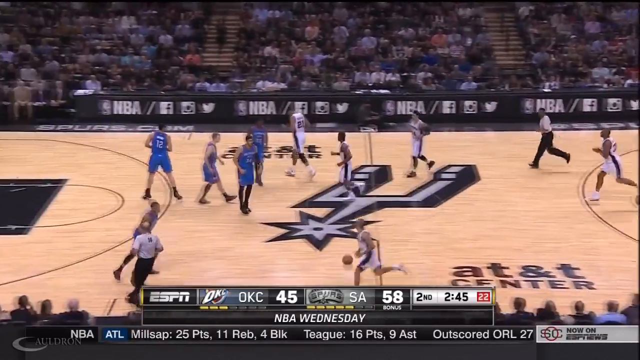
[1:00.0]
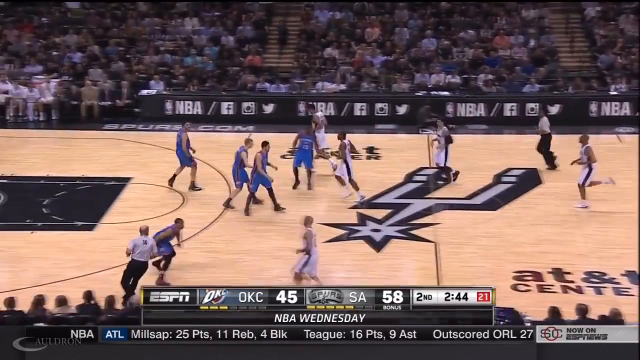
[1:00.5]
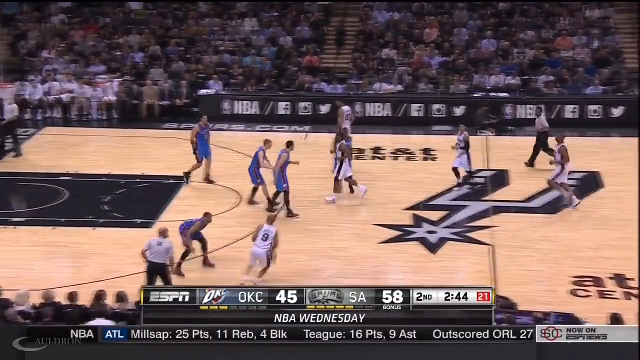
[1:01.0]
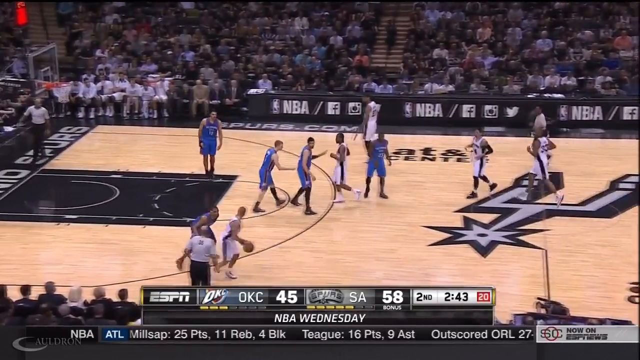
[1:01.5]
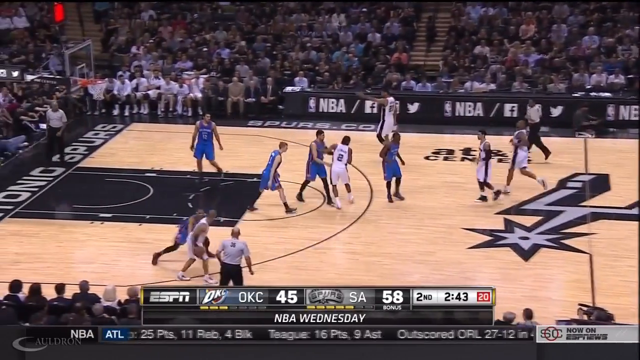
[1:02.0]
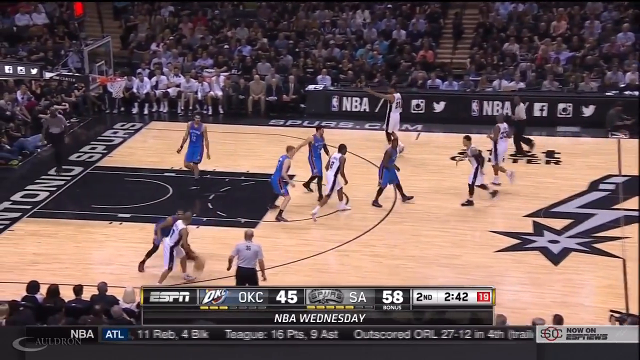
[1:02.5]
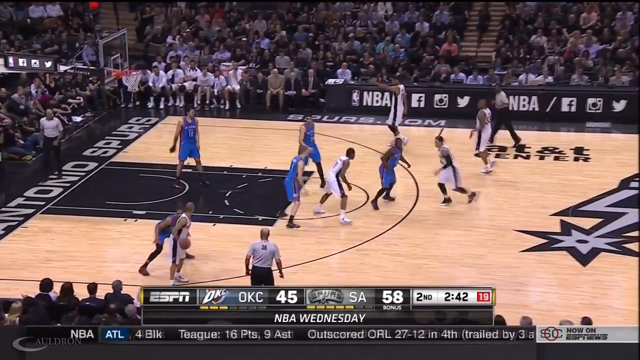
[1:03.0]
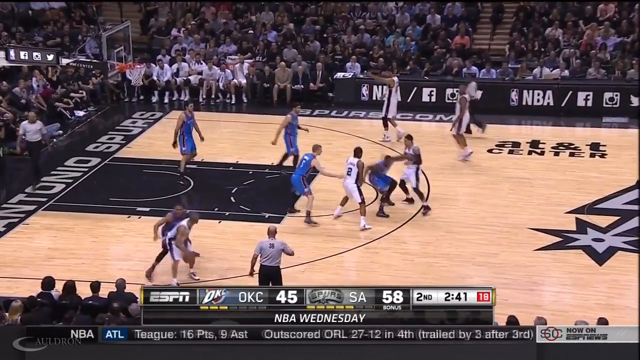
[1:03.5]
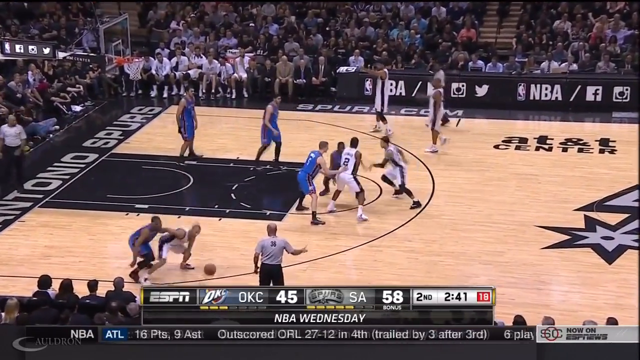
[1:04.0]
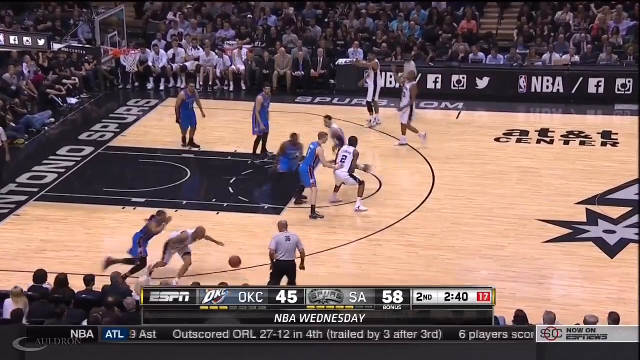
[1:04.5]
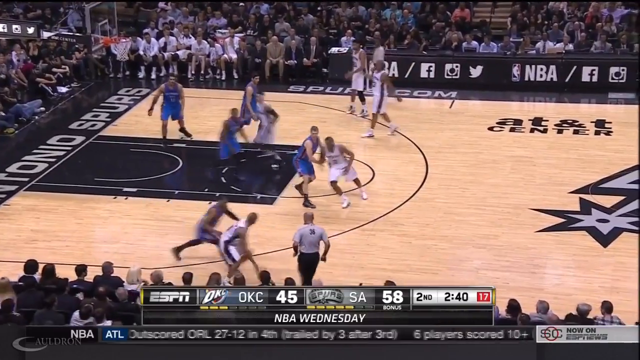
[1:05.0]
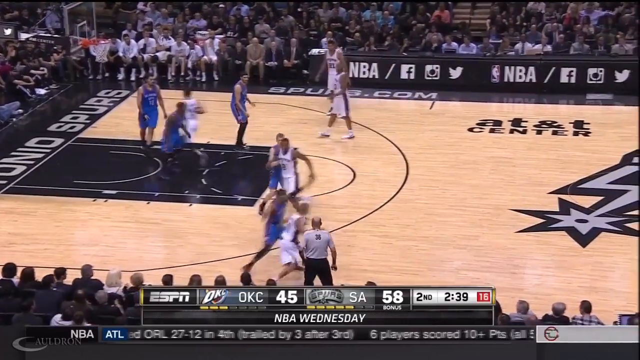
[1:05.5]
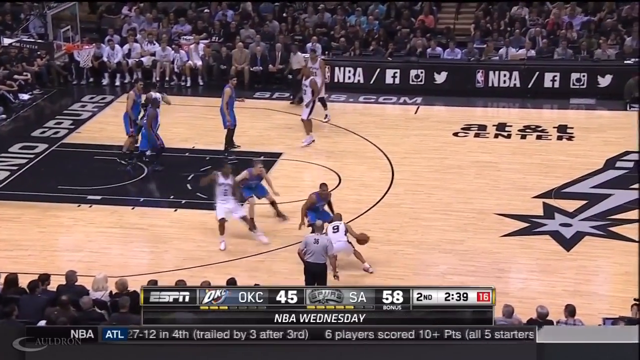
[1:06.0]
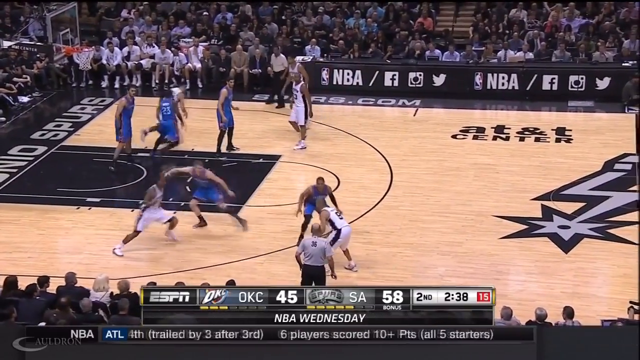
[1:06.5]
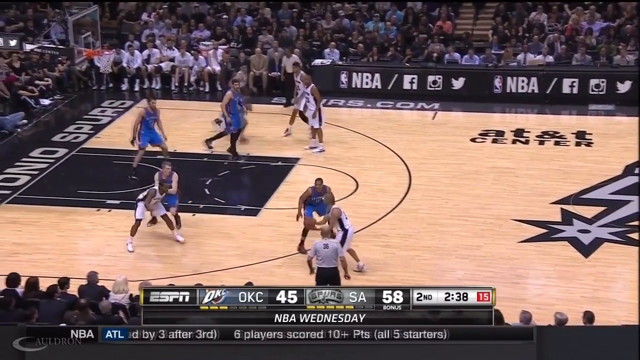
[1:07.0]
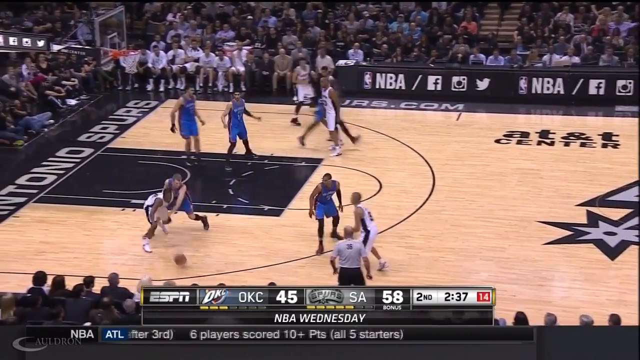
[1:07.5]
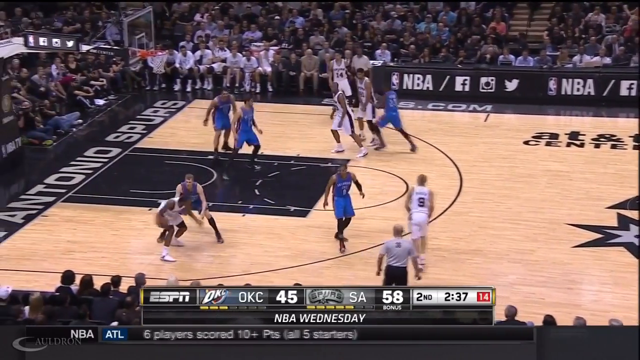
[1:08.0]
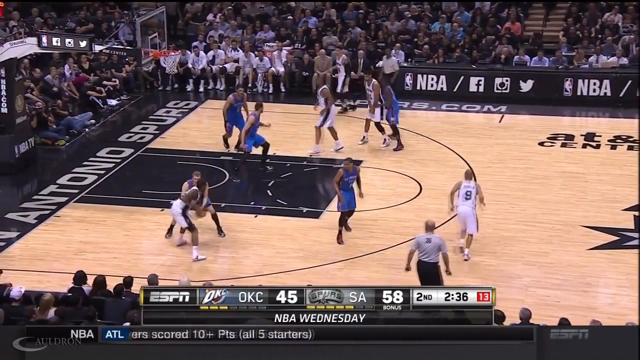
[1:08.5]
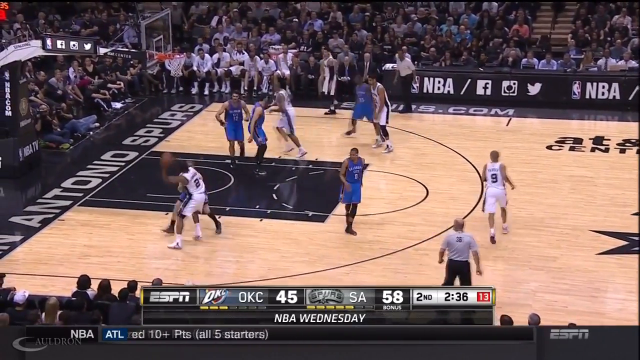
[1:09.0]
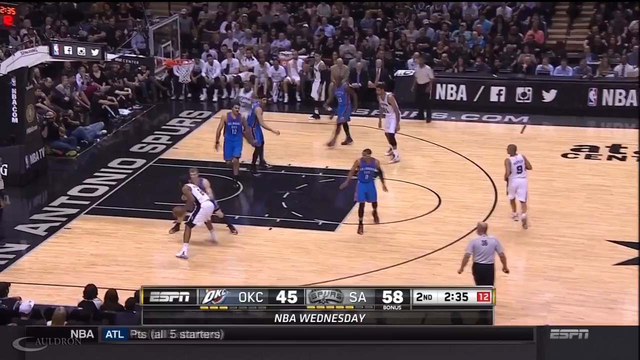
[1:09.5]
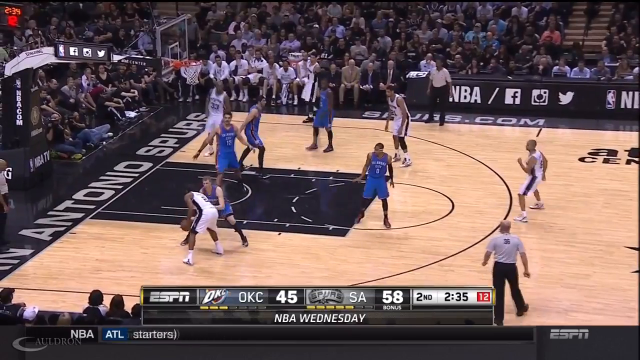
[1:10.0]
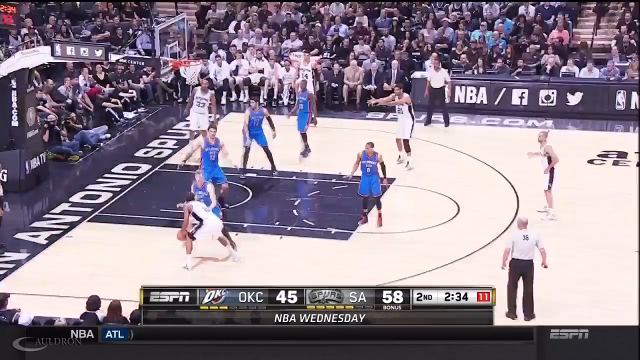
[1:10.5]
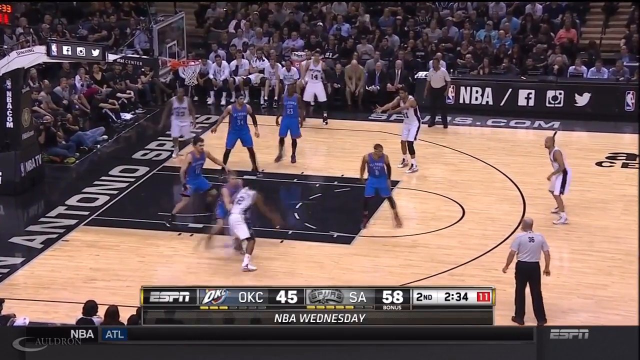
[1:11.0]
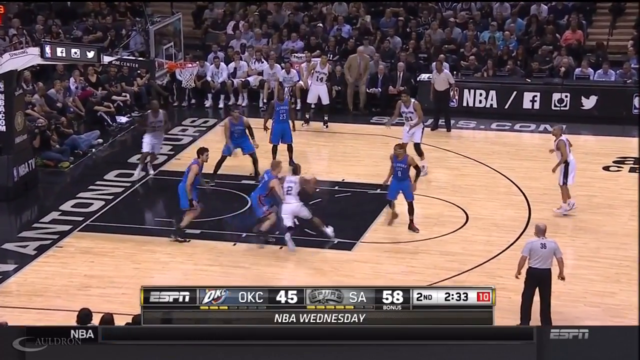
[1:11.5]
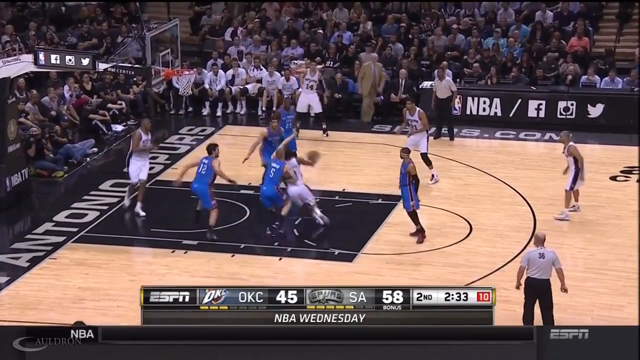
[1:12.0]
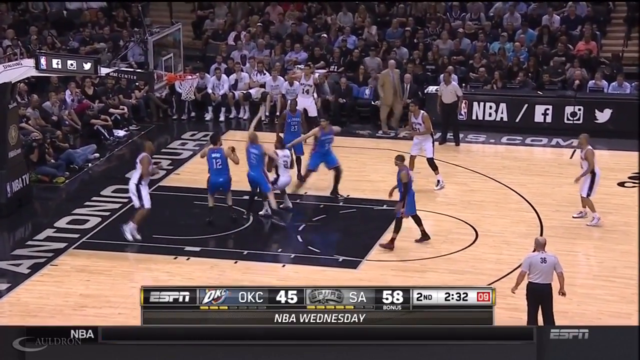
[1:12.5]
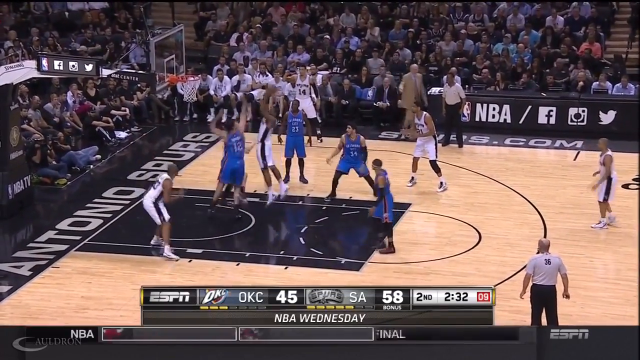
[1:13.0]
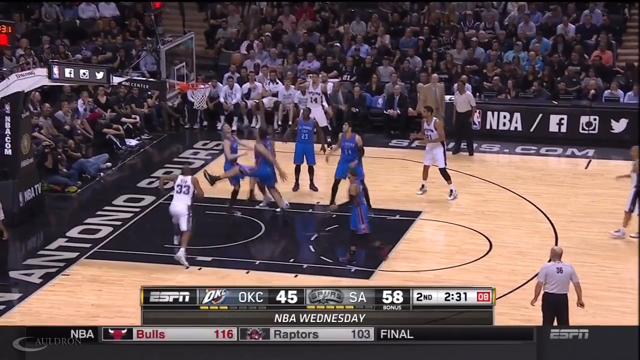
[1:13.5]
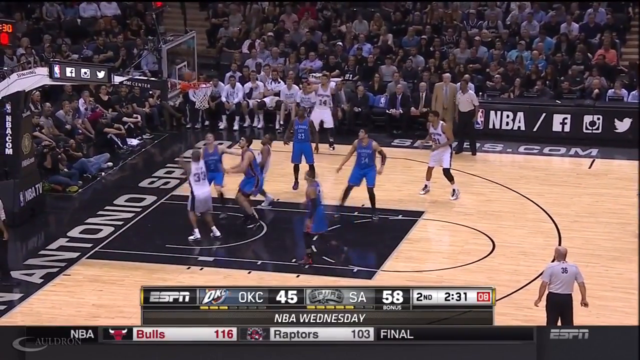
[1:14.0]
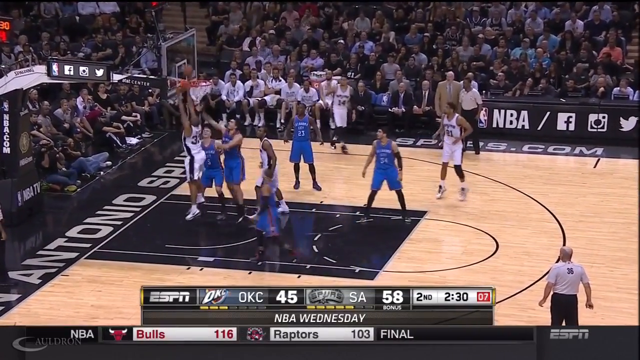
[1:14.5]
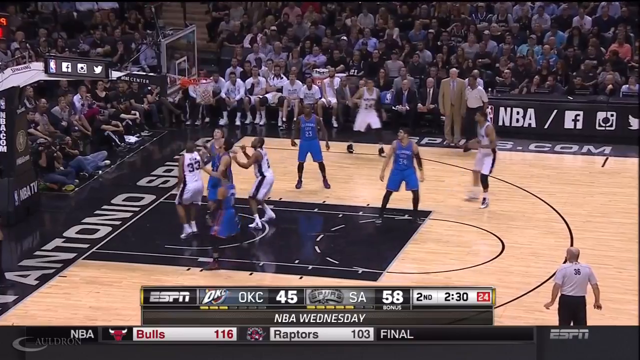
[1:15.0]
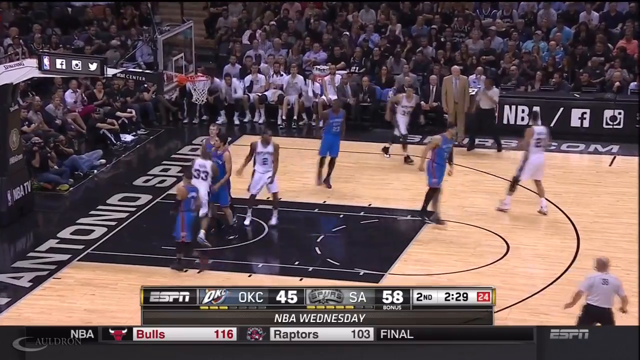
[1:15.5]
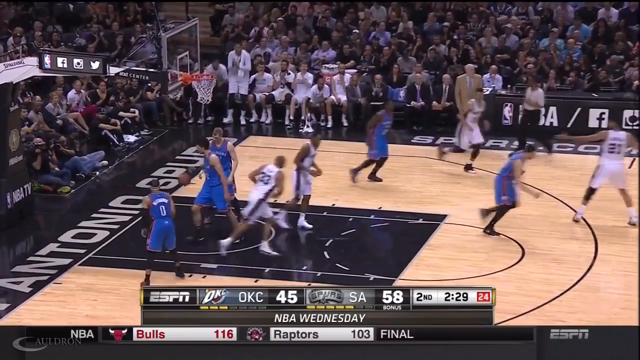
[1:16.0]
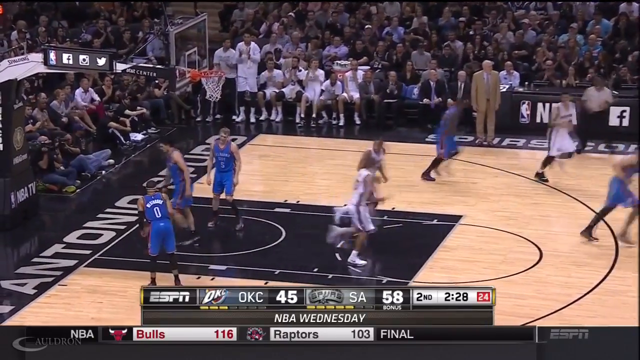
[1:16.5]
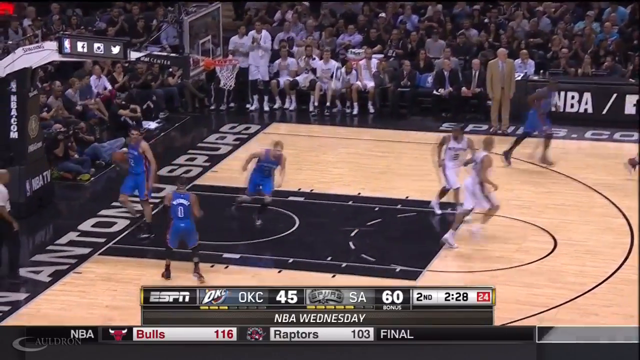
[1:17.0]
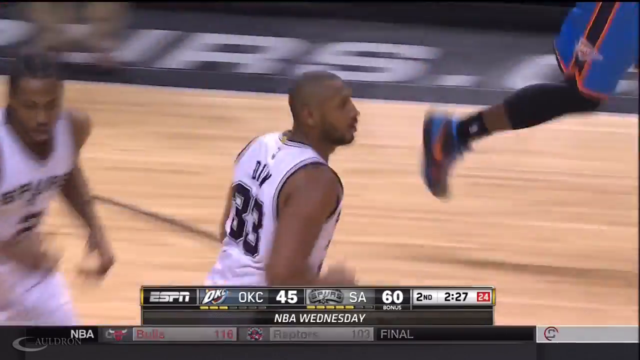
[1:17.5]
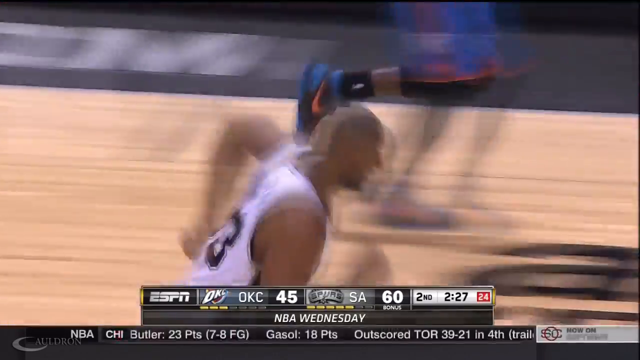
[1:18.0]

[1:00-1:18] The game continues with the scoreboard at 45 for one team and 58 for the other, and possession fluctuates between the white team and the blue team. A player from the white team takes a shot and the ball goes through the hoop. He runs off looking quite elated and pleased, and there is a small reaction from the audience, with some people standing up and clapping. The scoreboard changes the white team's score from 58 to 60. Other members of the white team who were sitting down, possibly reserves, stand up and clap. NBA branding runs across the borders of the court along with Facebook, Instagram and Twitter logos.